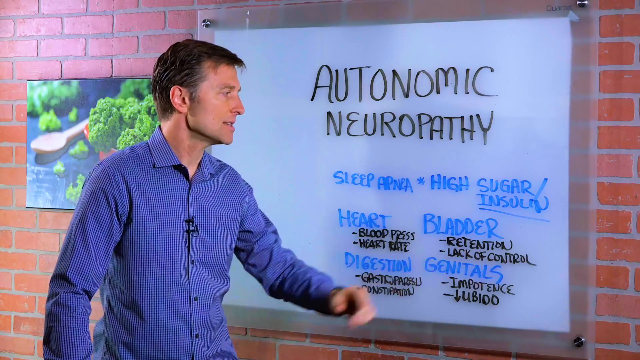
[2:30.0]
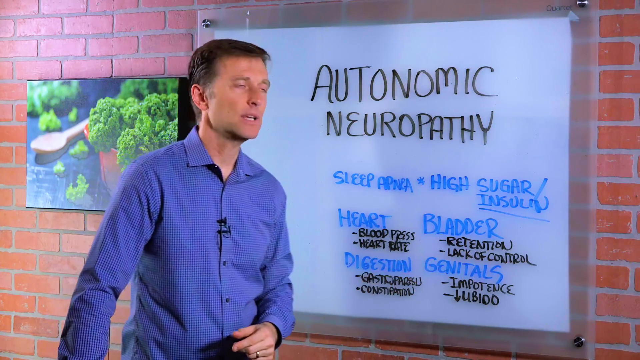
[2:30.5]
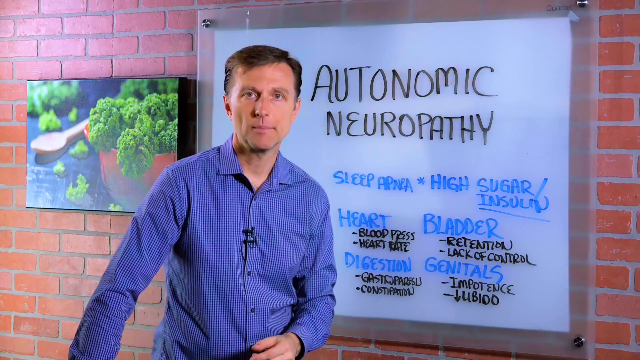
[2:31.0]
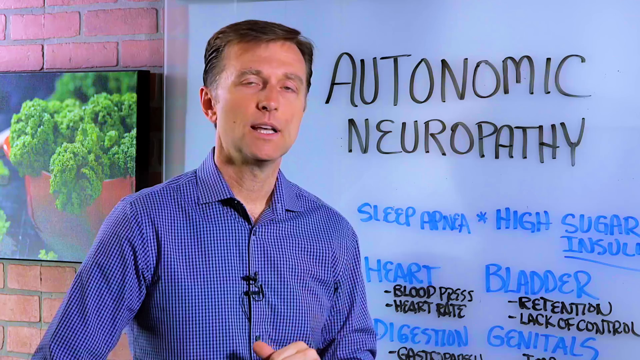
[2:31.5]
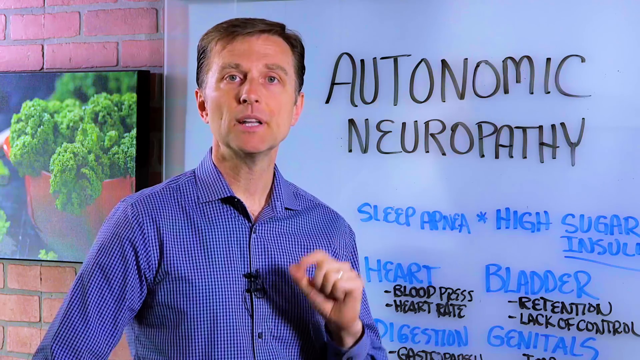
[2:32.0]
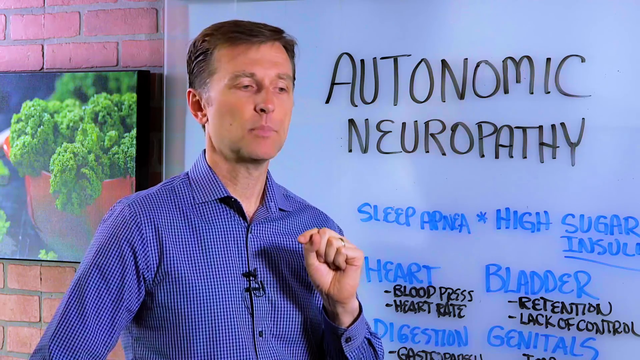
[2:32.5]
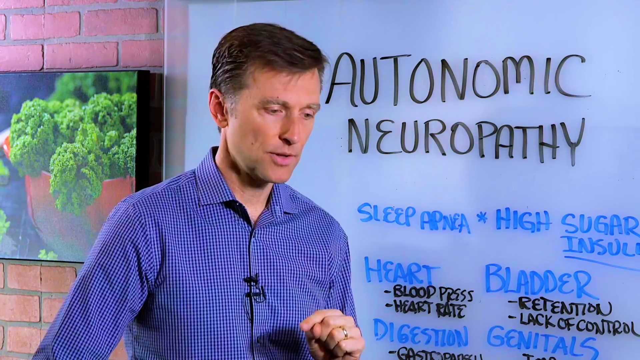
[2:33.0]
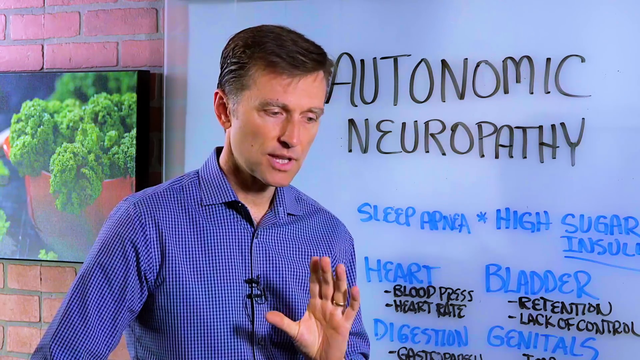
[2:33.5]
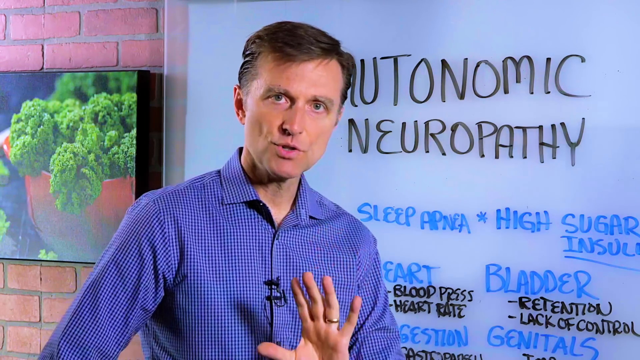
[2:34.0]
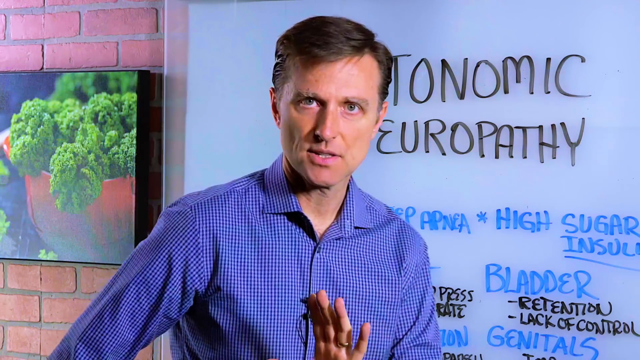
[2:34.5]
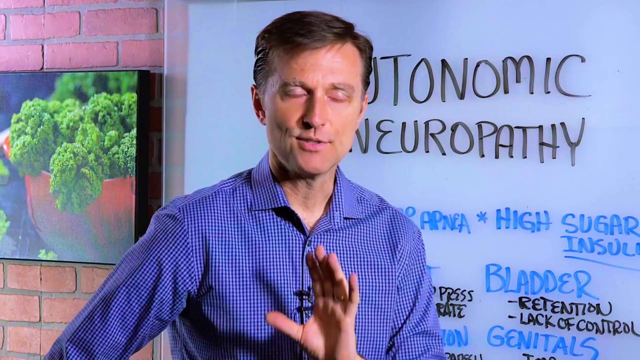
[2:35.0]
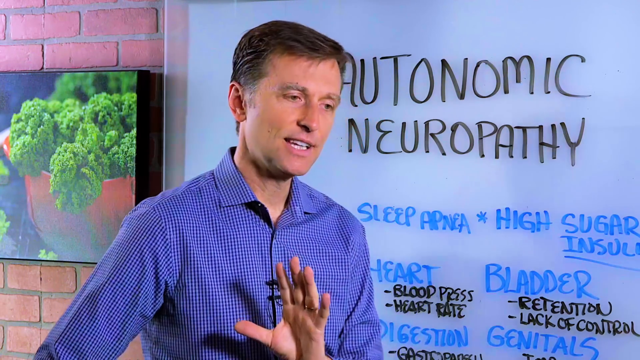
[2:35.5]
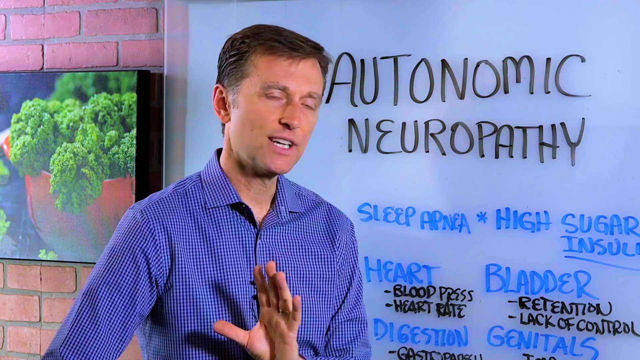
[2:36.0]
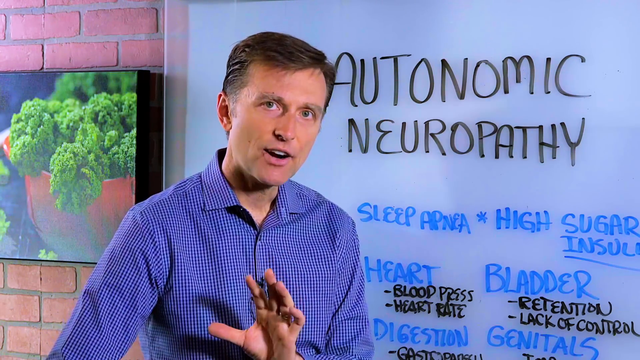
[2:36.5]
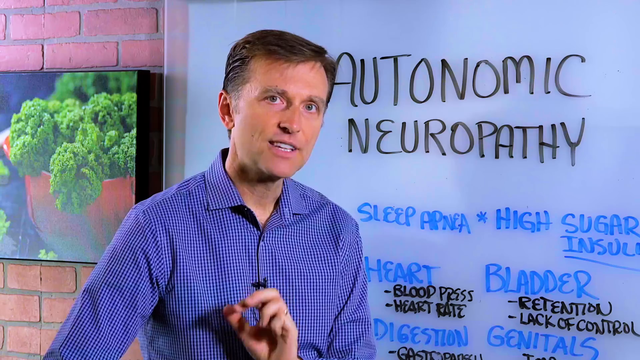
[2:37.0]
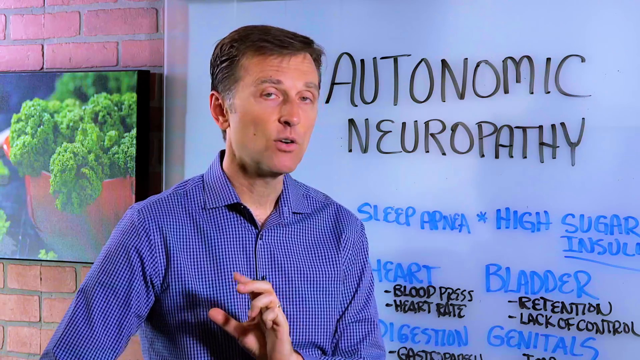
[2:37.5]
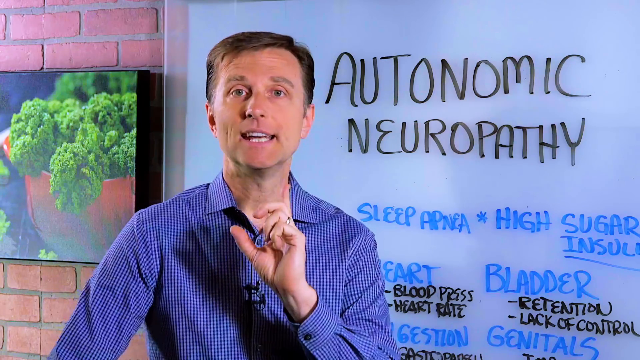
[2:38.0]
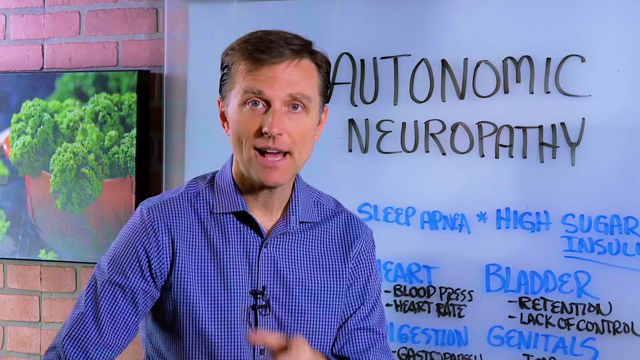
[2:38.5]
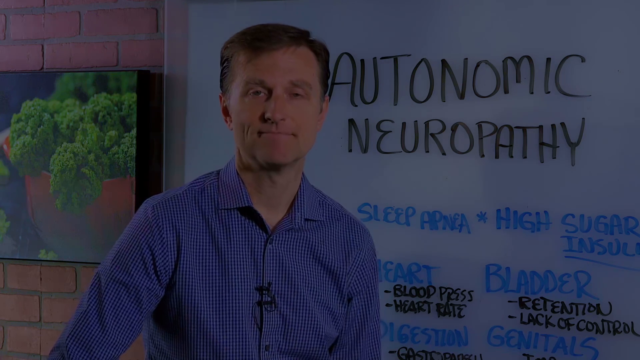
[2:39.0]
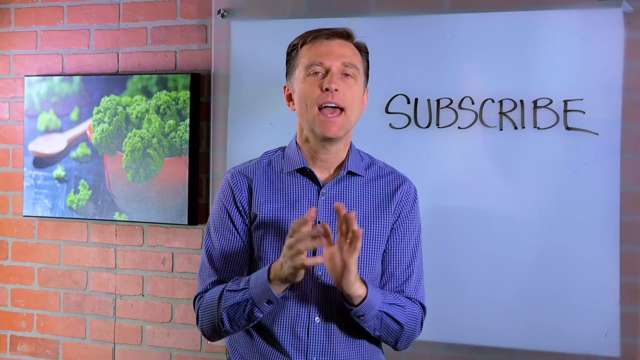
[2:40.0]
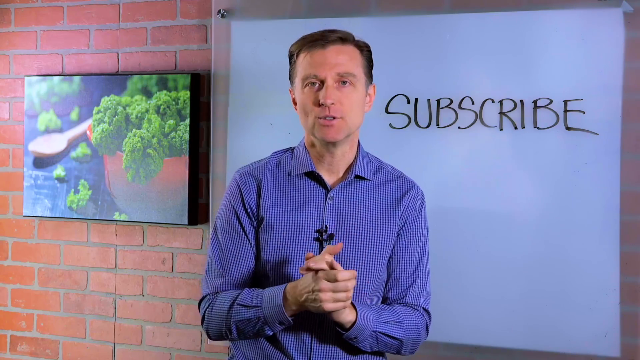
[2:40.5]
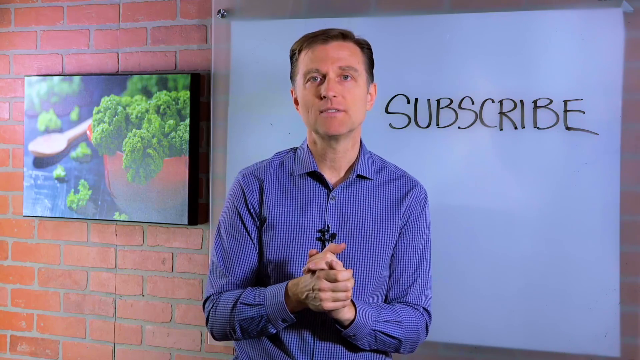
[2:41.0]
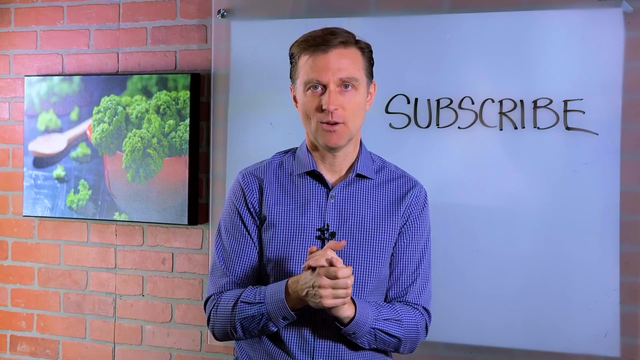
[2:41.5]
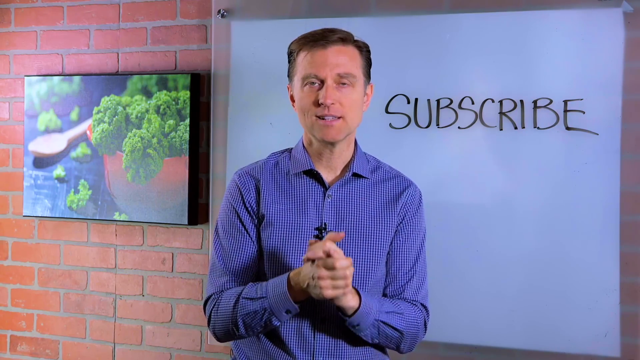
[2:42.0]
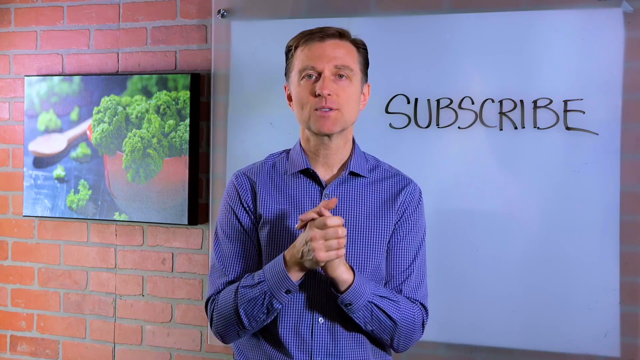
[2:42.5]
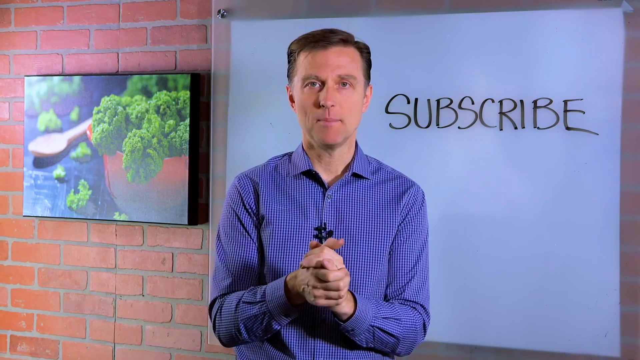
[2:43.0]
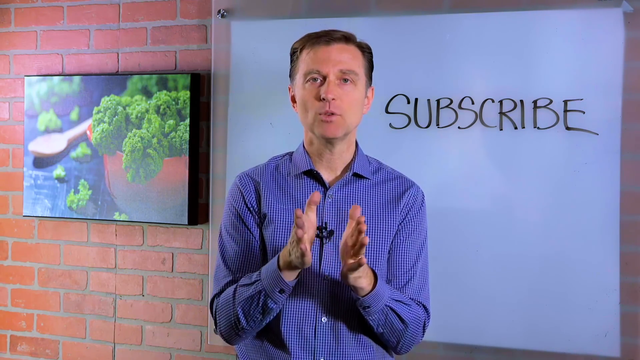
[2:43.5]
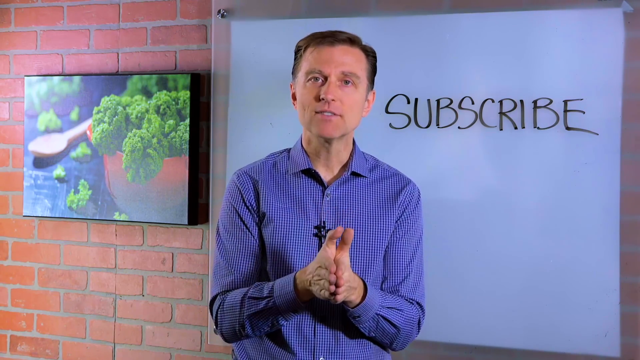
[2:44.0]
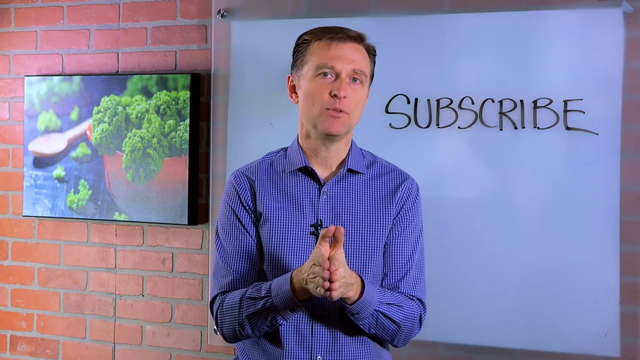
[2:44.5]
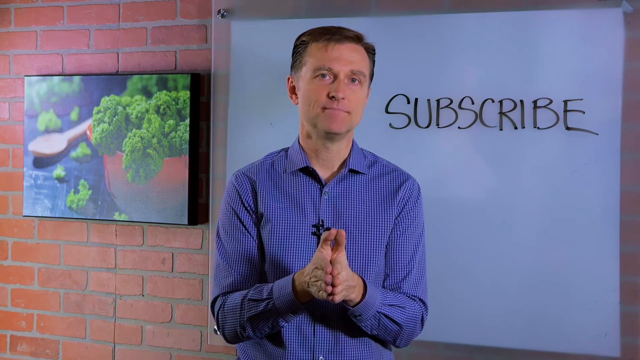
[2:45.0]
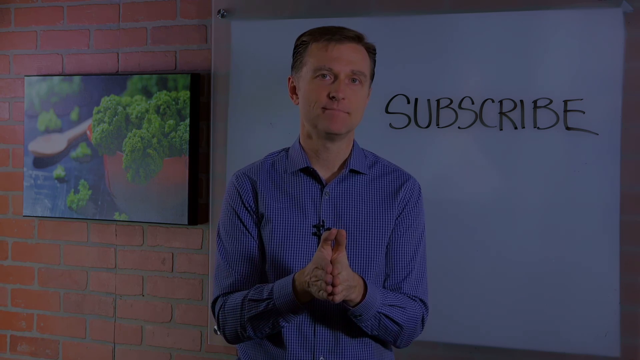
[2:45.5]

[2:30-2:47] Dr. Mandel is still speaking to his audience and appears to be making a video for his YouTube channel. The camera moves to a close-up of him. He looks like he is looking down, sort of as if he is thinking as he speaks. He wears a collared blue and white striped shirt with long sleeves and buttons down the front, with a black microphone attached to the shirt in the chest area. The whiteboard behind him is seen more closely, with the words "autonomic neuropathy" written in black at the top. In the close-up he is visible from the chest up. His left arm is bent at the elbow, his left hand pivoted to the right, his fingers tilted a bit forward and his thumb outstretched away from his hand. Next, he points toward the audience with his pointer finger, his thumb up toward the ceiling.